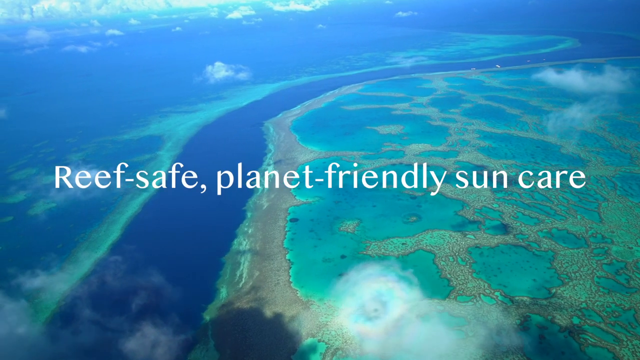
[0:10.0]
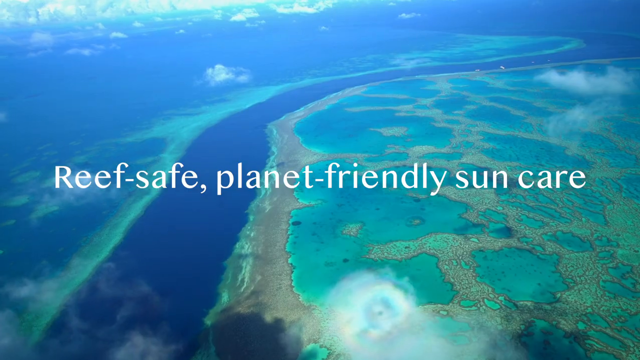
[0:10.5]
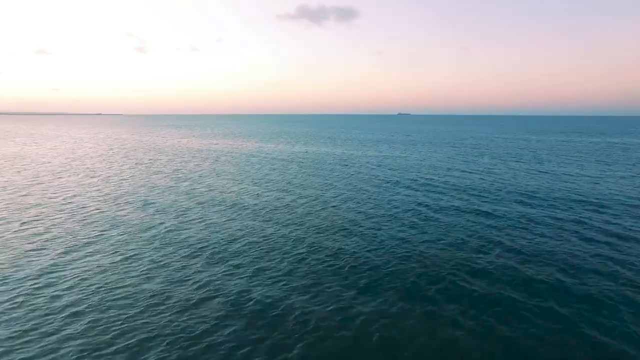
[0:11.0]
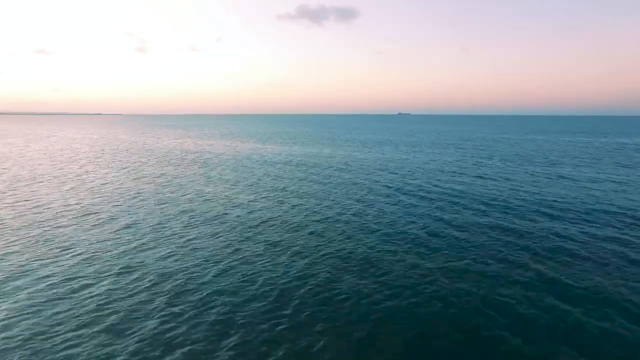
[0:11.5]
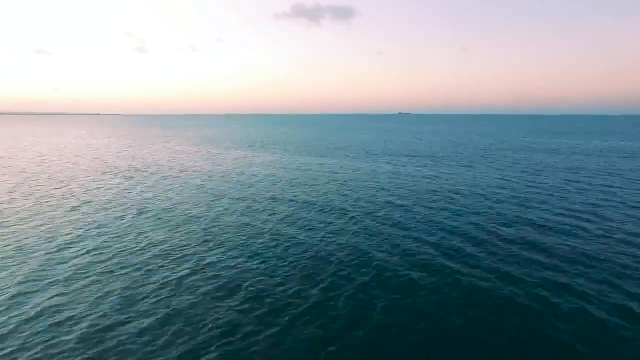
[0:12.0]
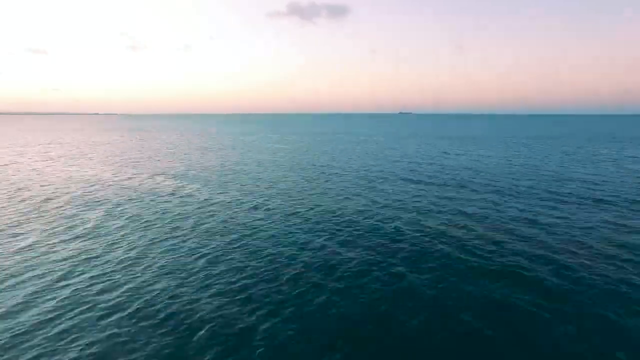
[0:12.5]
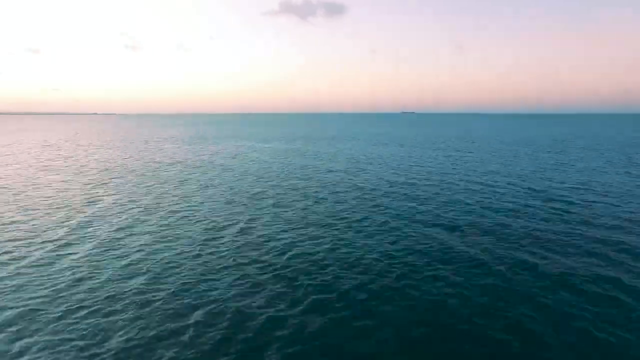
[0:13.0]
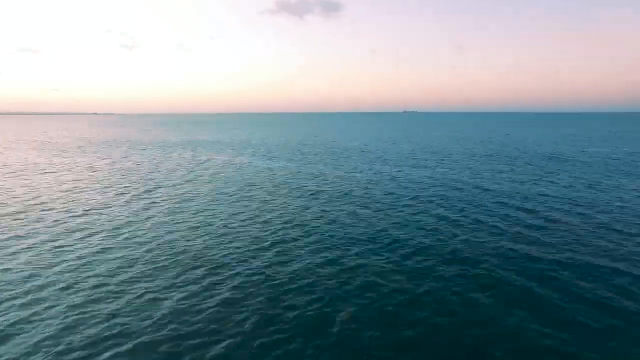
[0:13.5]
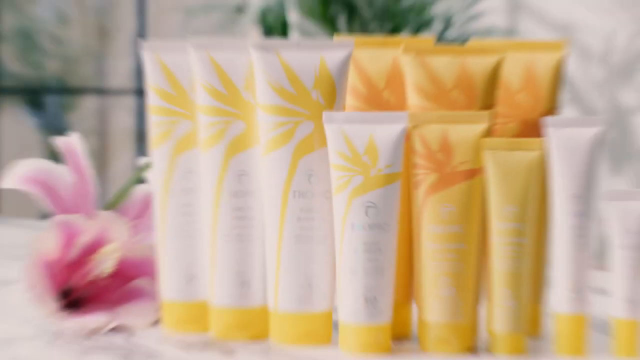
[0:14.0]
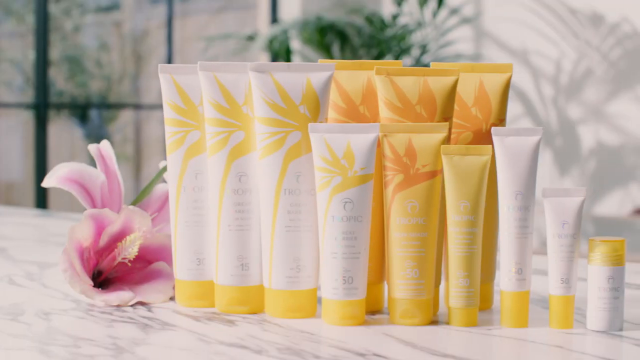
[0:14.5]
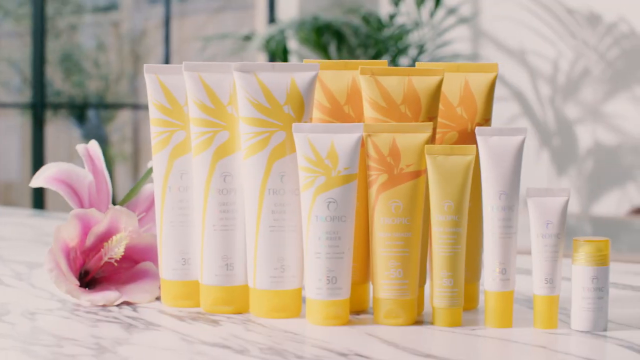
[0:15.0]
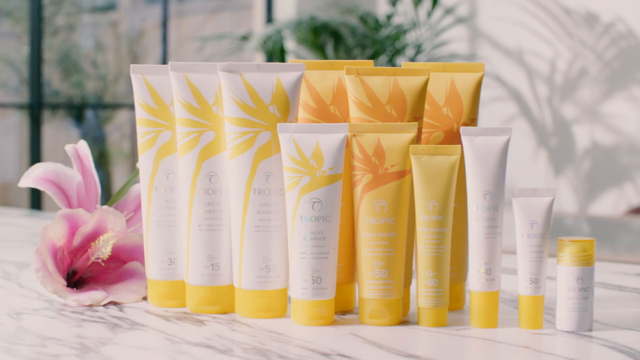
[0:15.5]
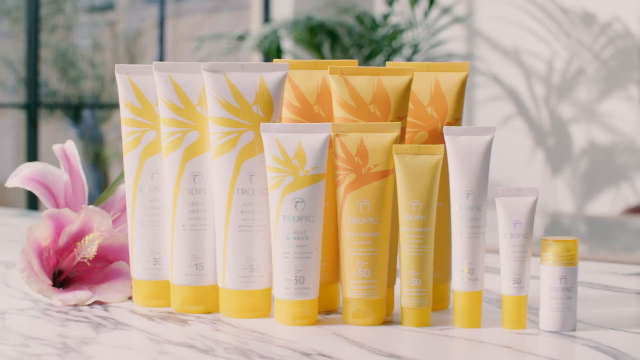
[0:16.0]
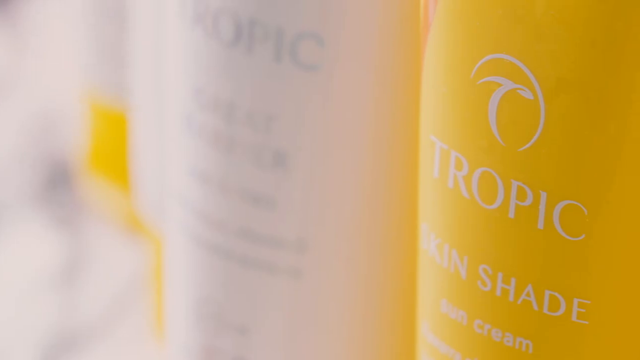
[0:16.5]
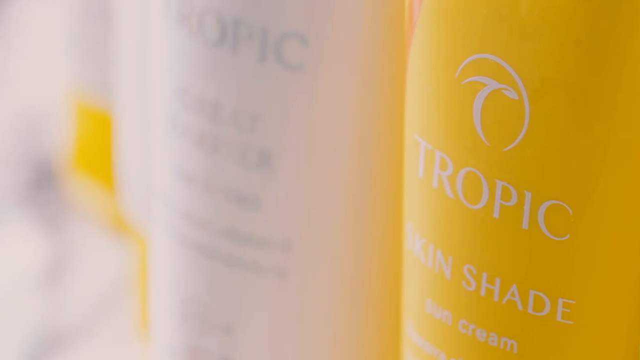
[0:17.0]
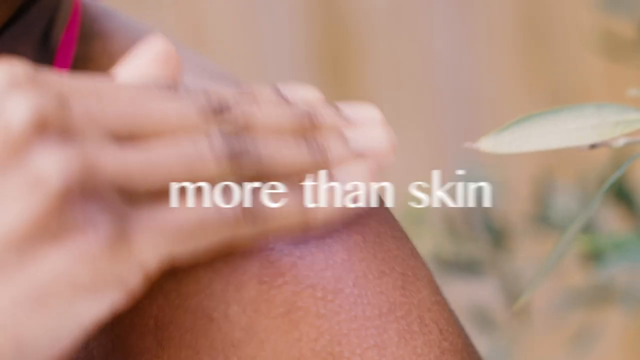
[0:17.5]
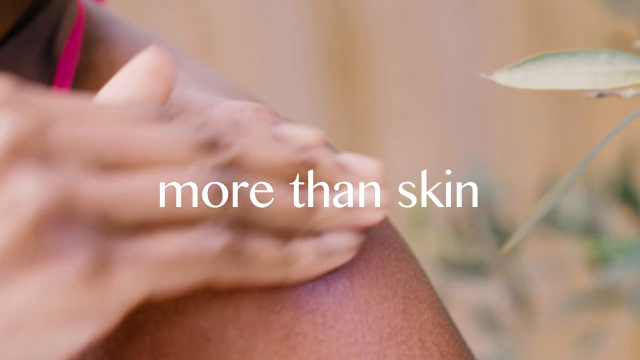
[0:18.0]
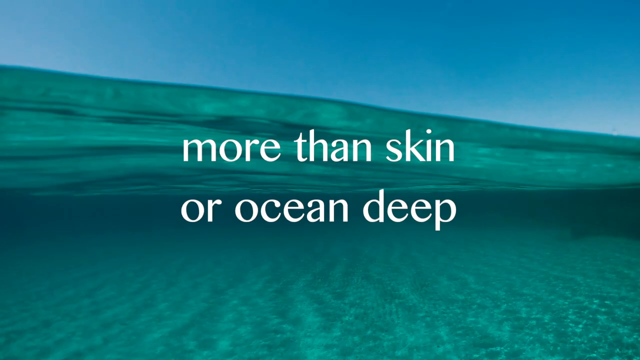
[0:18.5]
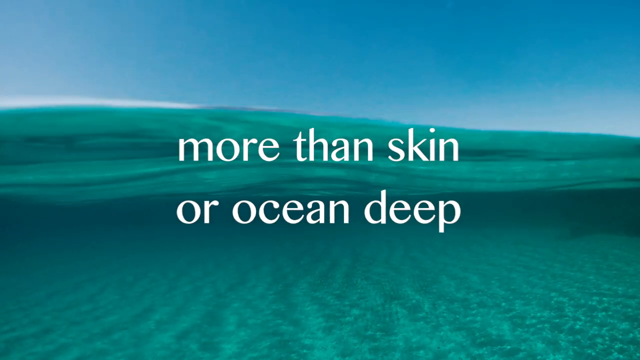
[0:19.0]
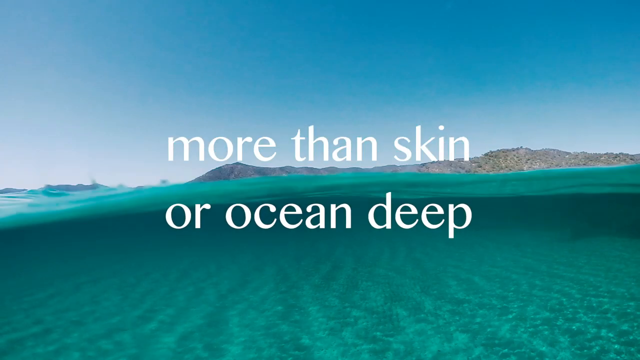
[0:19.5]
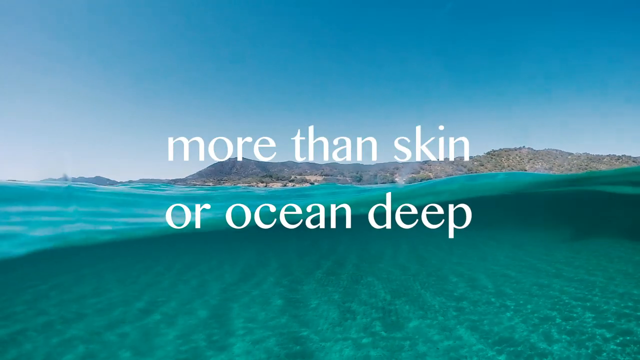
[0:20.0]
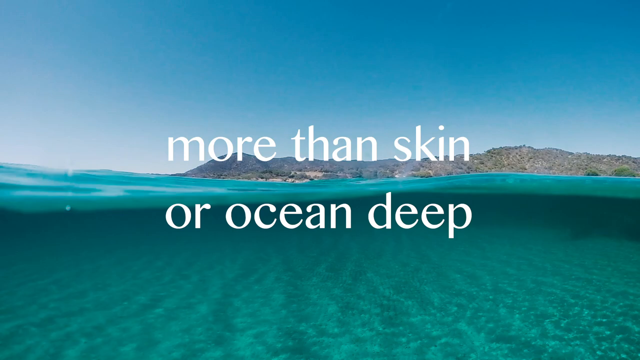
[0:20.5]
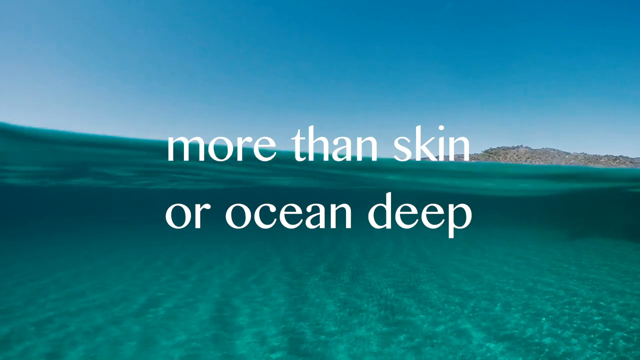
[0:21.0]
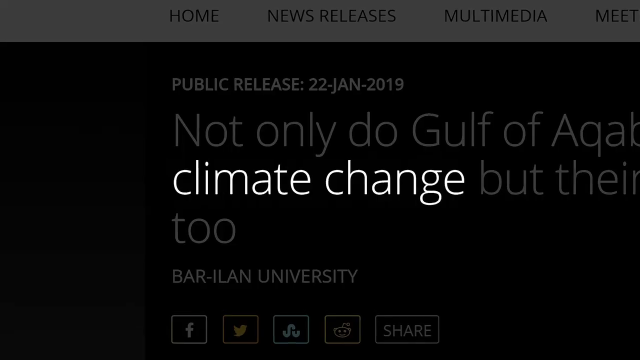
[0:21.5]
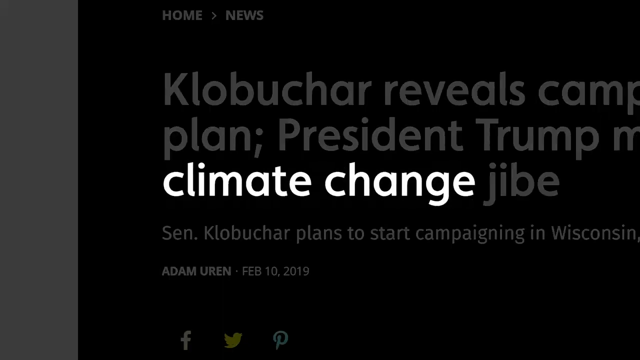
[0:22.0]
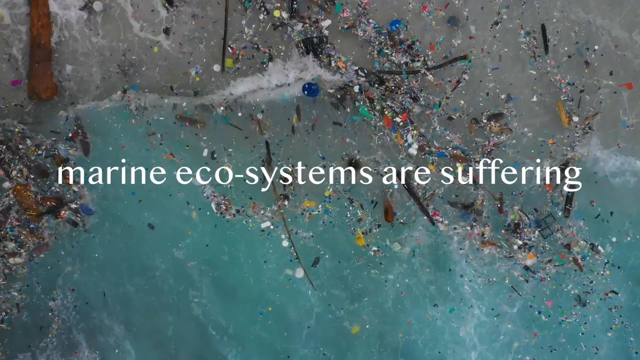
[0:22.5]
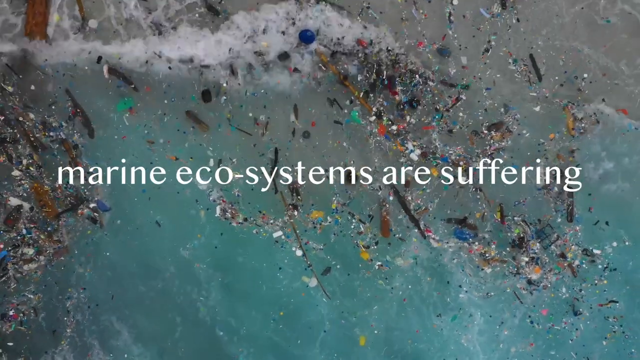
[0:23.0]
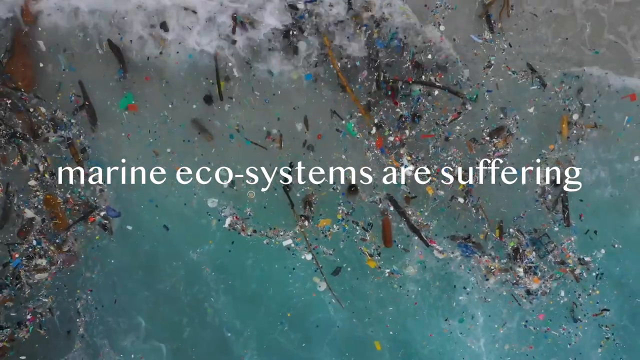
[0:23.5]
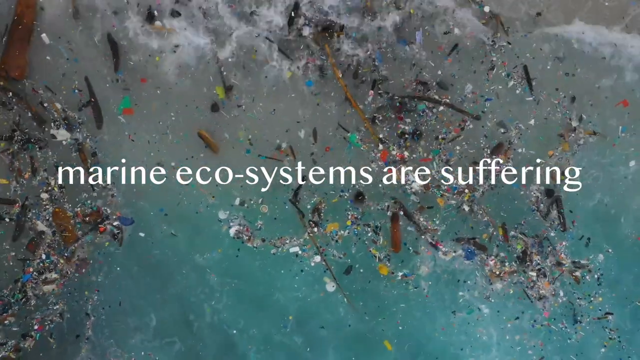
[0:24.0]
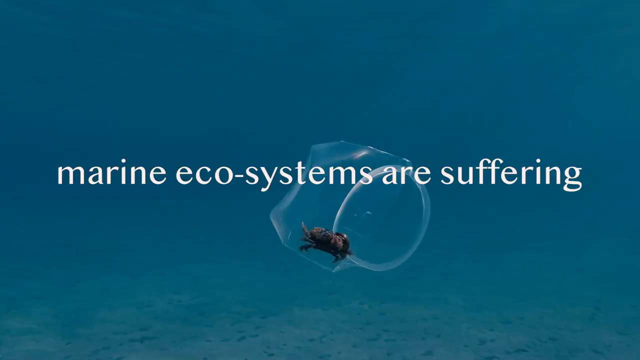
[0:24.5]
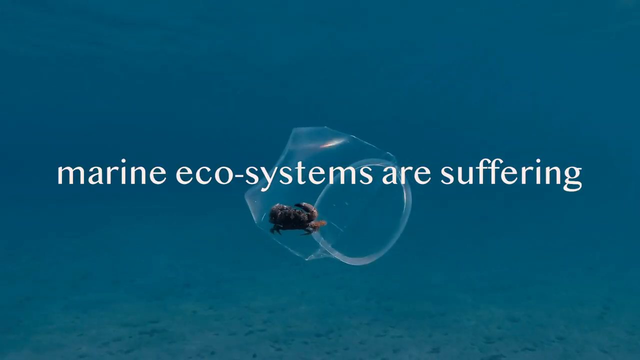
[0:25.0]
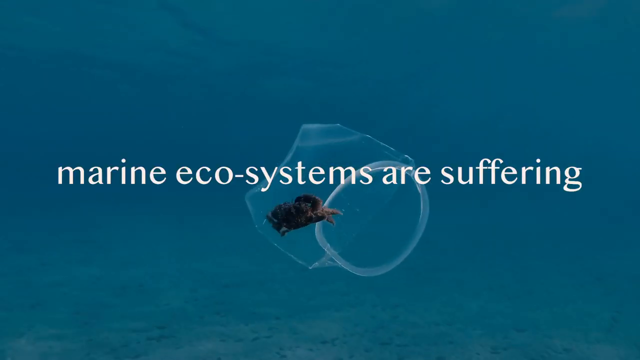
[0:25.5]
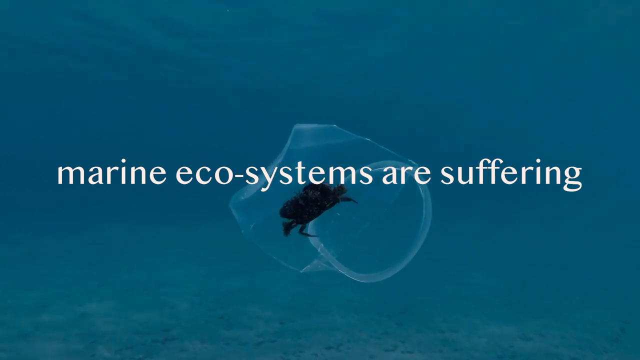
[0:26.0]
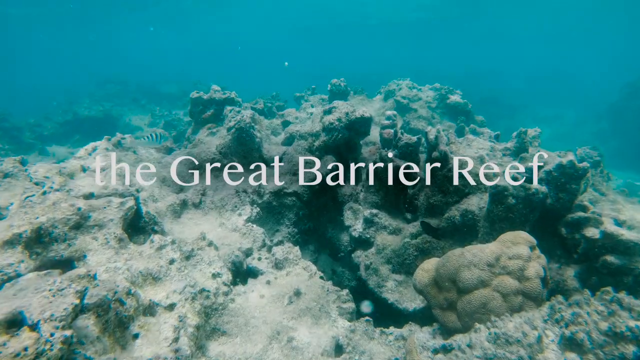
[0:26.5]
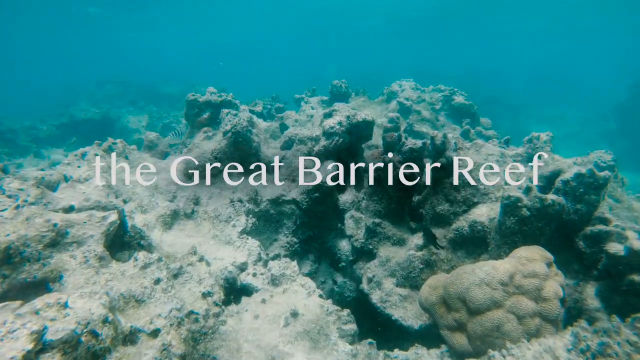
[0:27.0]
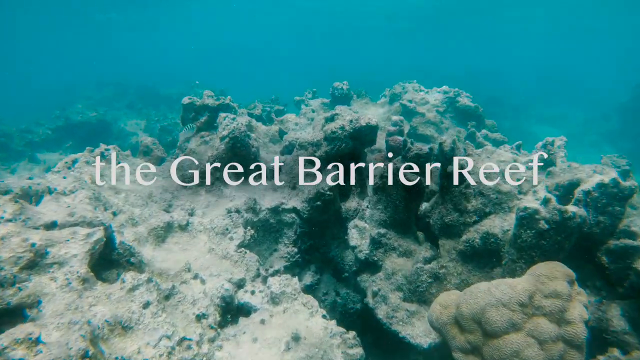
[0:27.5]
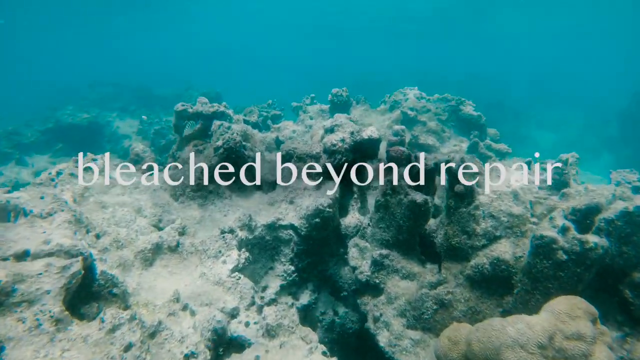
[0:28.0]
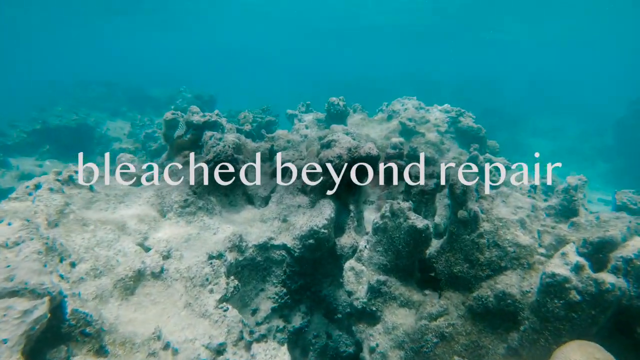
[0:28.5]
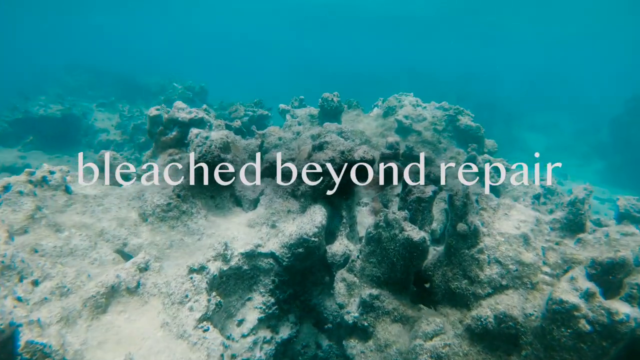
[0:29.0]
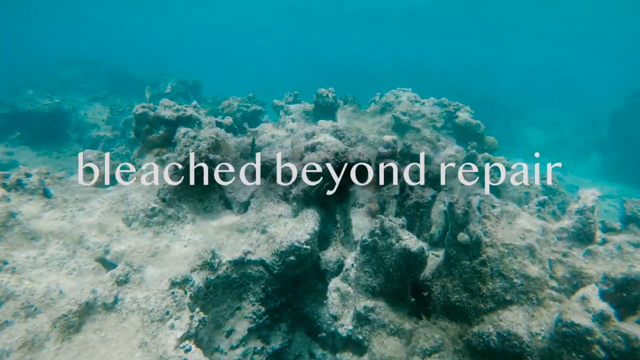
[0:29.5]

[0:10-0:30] An overhead view shows the ocean and island areas of the location, with some clouds in the sky and what appear to be islands and reefs. White text in the center says "reef safe planet friendly sun care." The camera slowly pans to the left. The next shot is a low-level angle of the water, with the camera moving very fast forward across it, apparently from a boat or some sort of drone. Next, several tubes of cream are stacked up on a table as the camera pans from left to right, followed by a close-up of the Tropic logo on one of the bottles. A person's hand then applies the cream to their shoulder. The next shot shows the ocean water with text that says "more than skin or ocean deep."